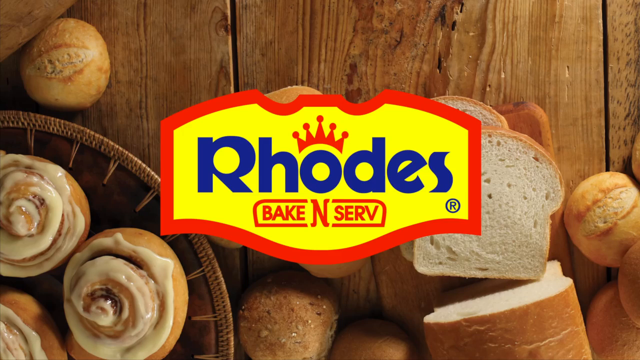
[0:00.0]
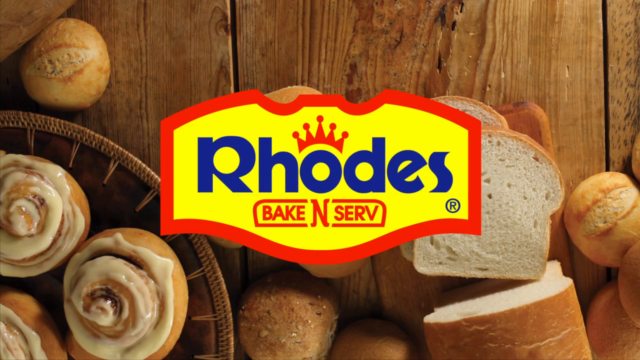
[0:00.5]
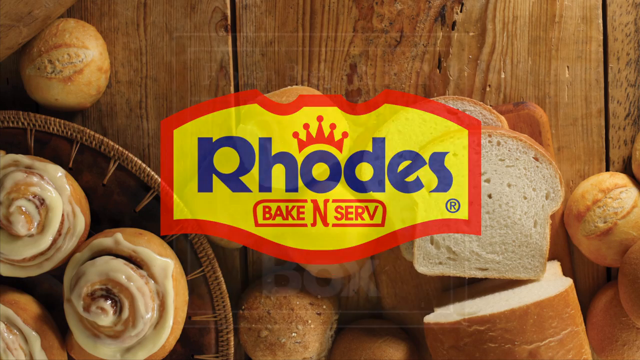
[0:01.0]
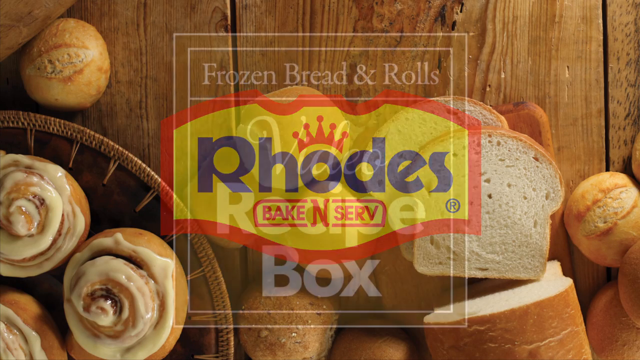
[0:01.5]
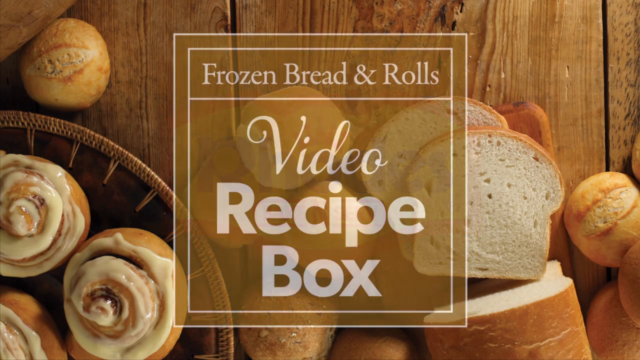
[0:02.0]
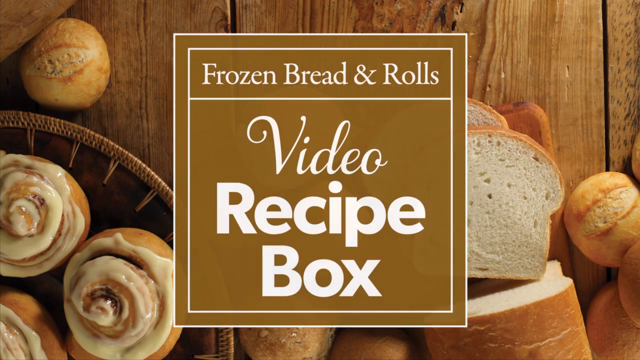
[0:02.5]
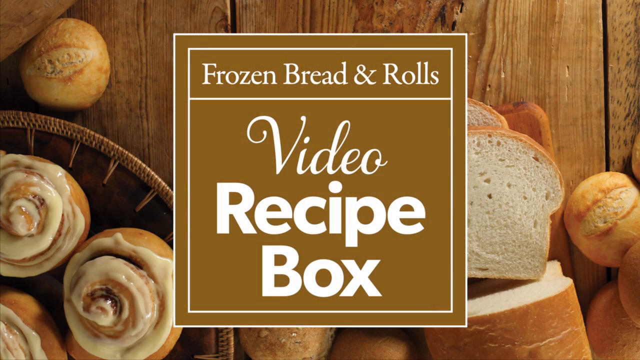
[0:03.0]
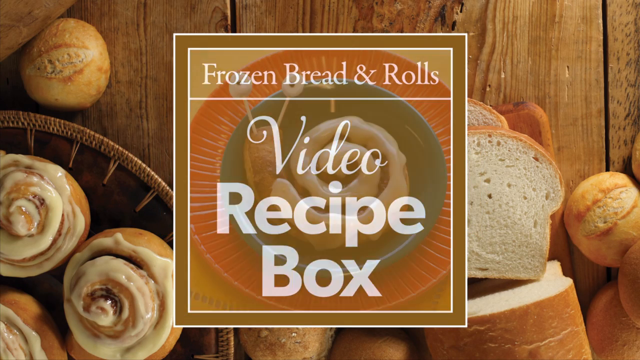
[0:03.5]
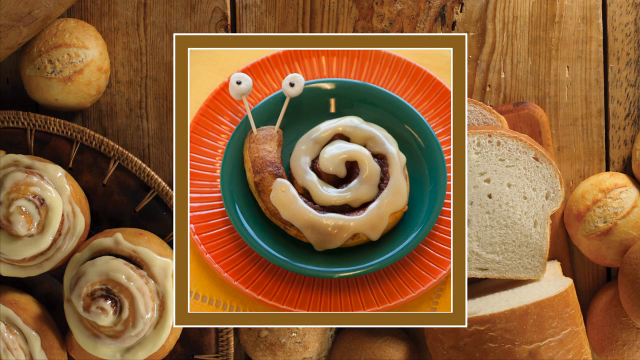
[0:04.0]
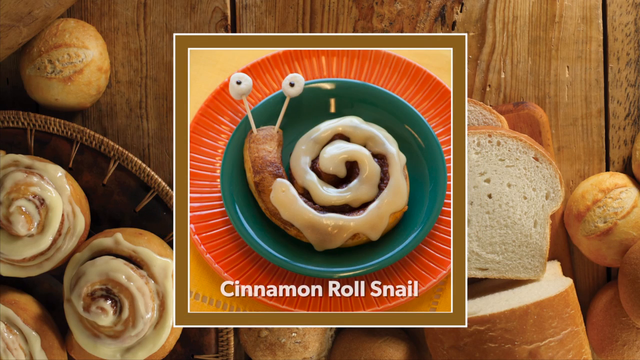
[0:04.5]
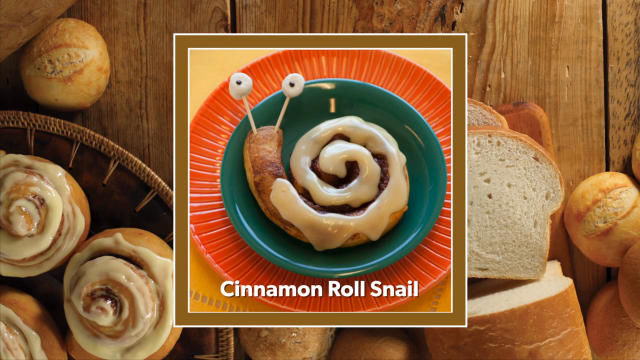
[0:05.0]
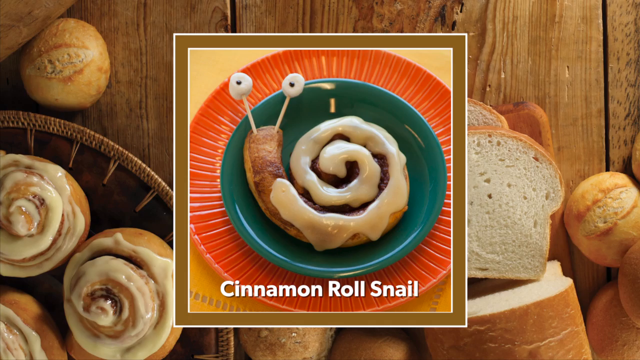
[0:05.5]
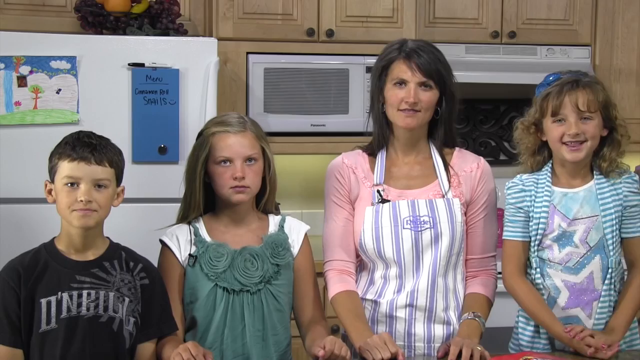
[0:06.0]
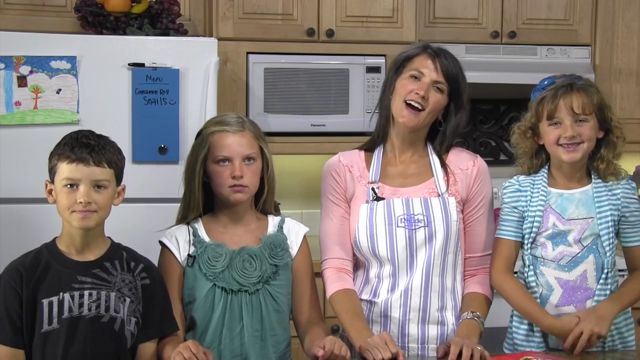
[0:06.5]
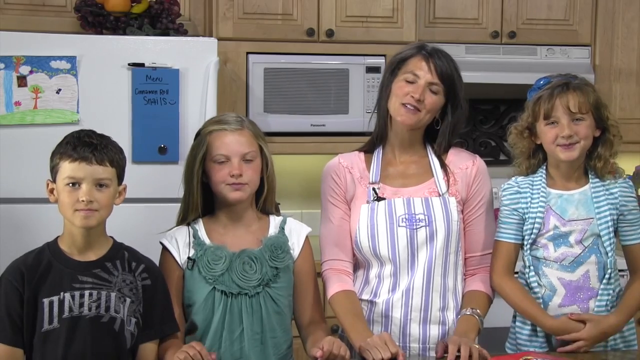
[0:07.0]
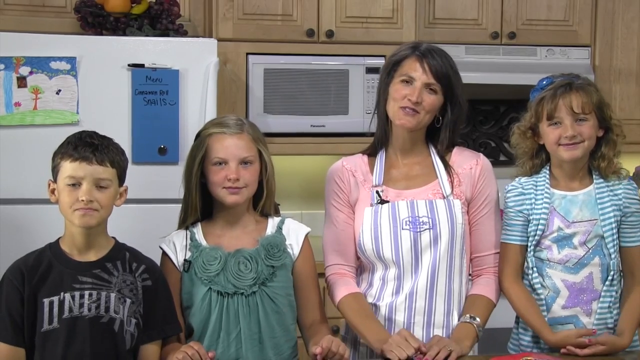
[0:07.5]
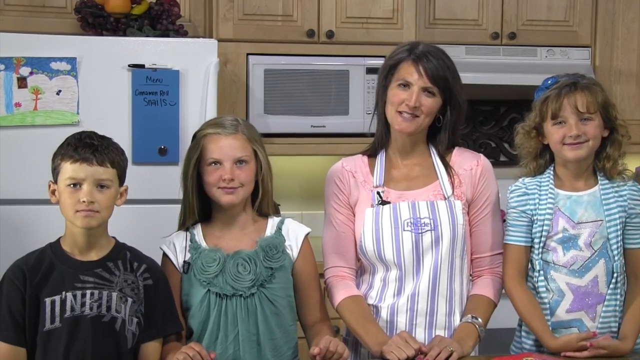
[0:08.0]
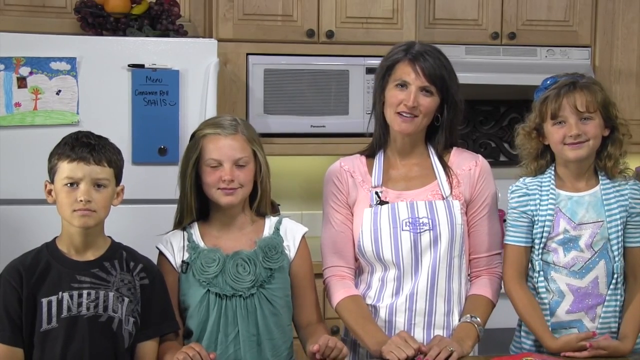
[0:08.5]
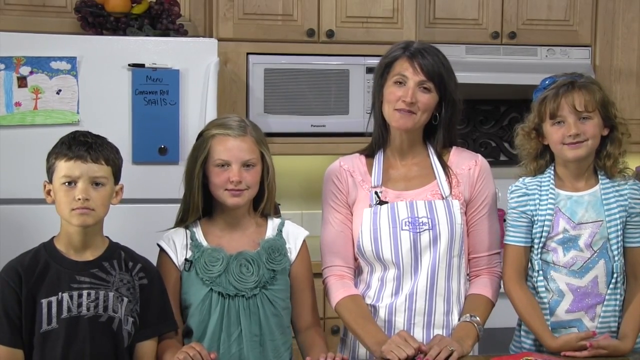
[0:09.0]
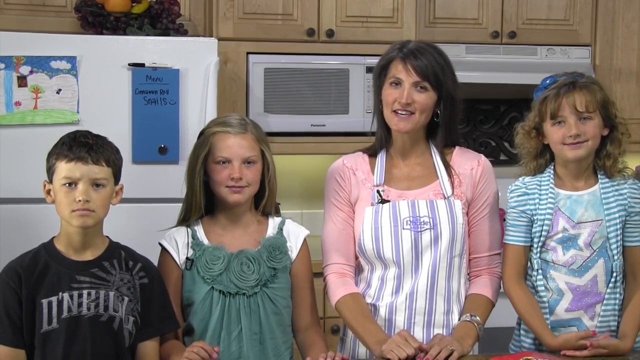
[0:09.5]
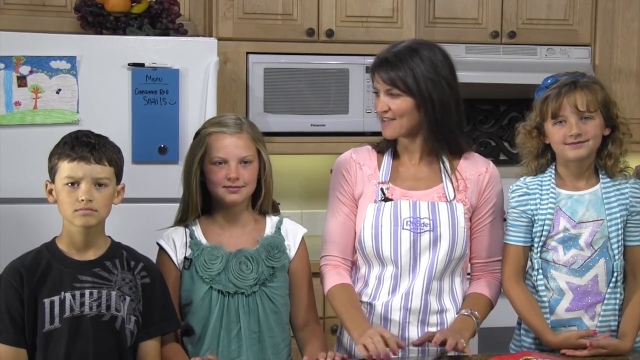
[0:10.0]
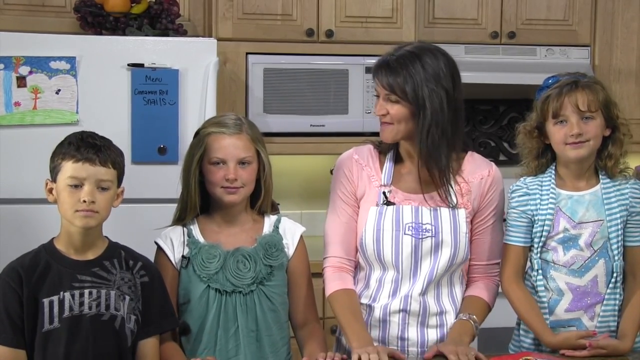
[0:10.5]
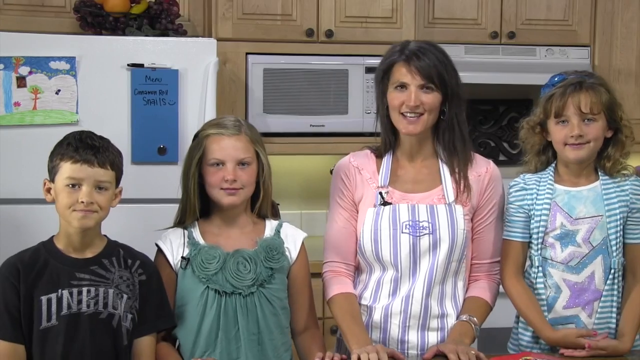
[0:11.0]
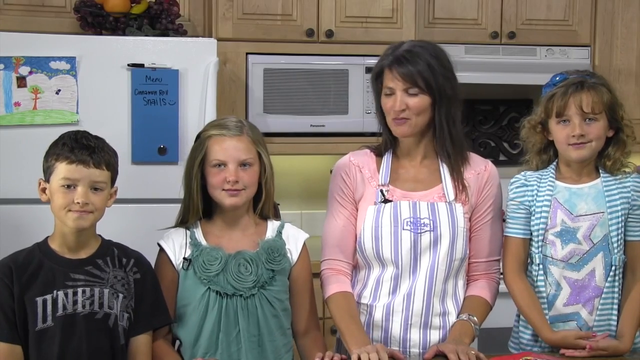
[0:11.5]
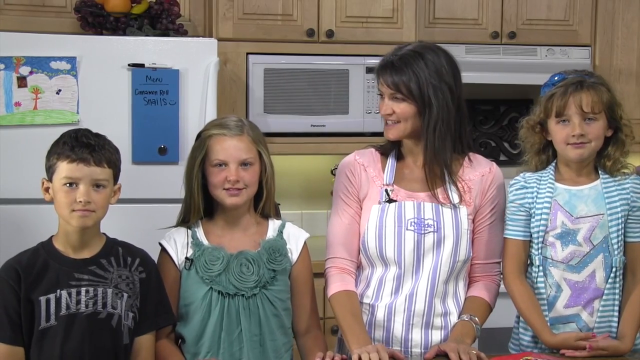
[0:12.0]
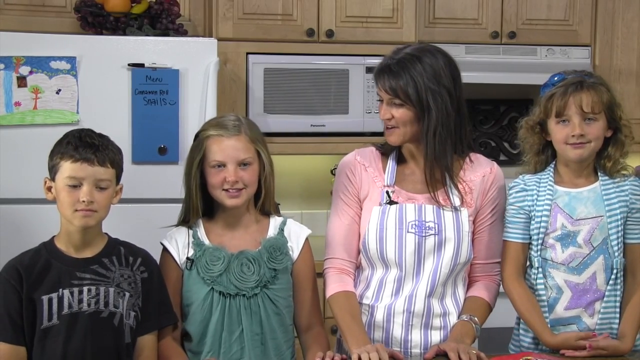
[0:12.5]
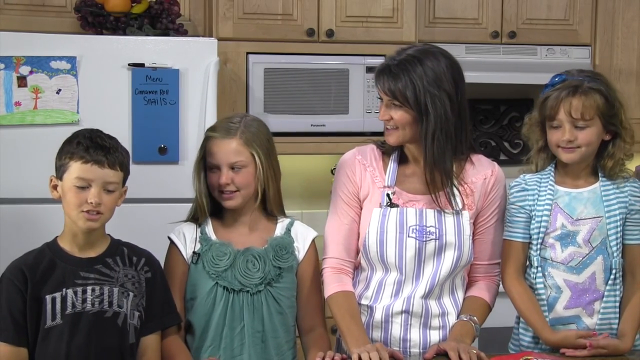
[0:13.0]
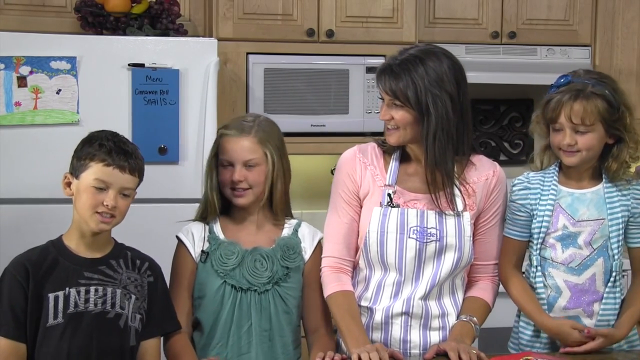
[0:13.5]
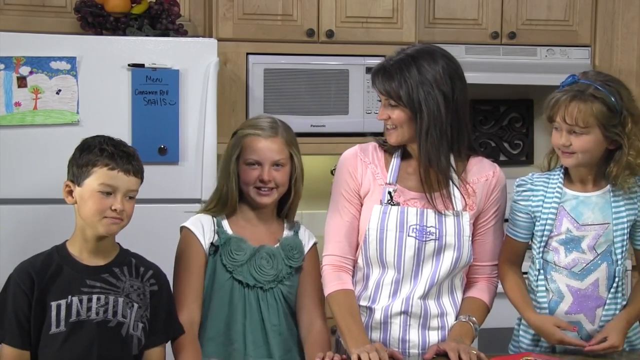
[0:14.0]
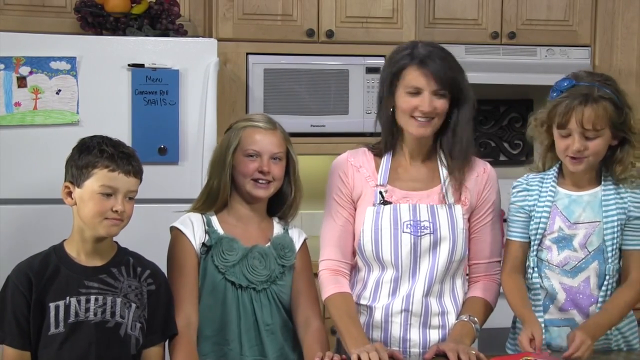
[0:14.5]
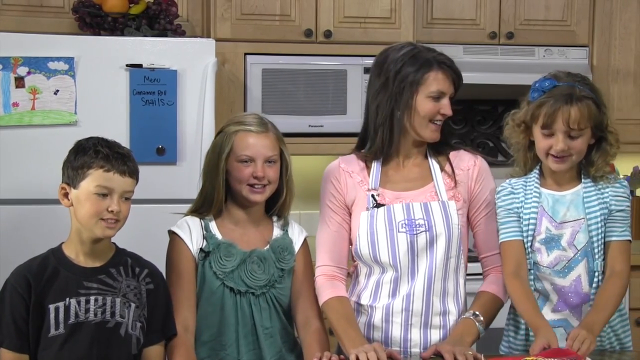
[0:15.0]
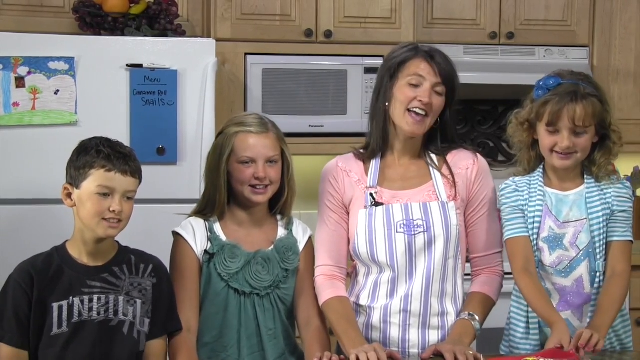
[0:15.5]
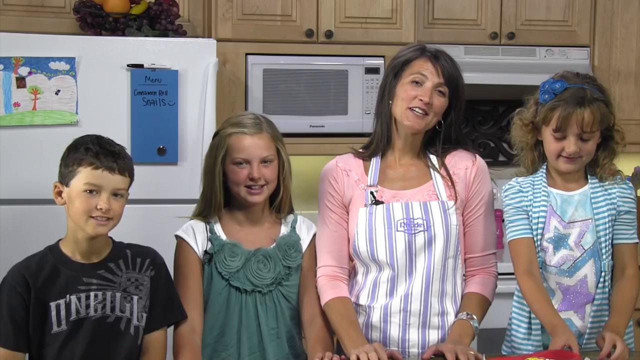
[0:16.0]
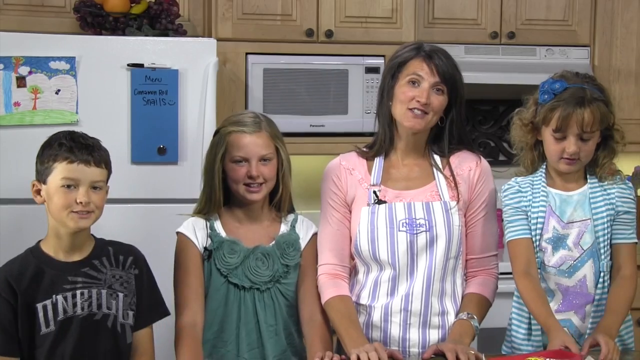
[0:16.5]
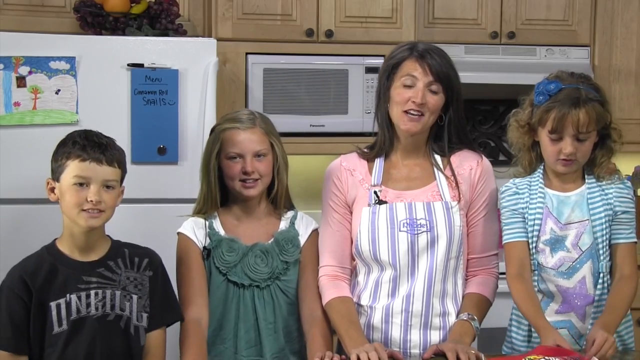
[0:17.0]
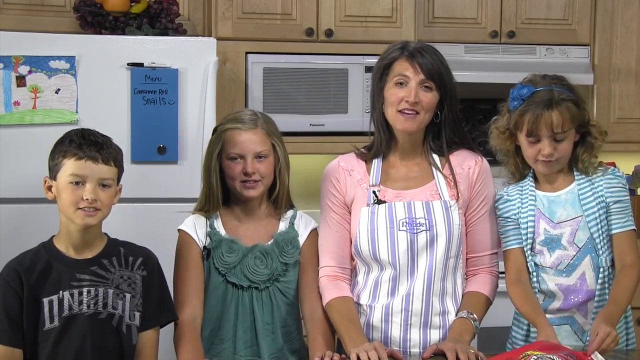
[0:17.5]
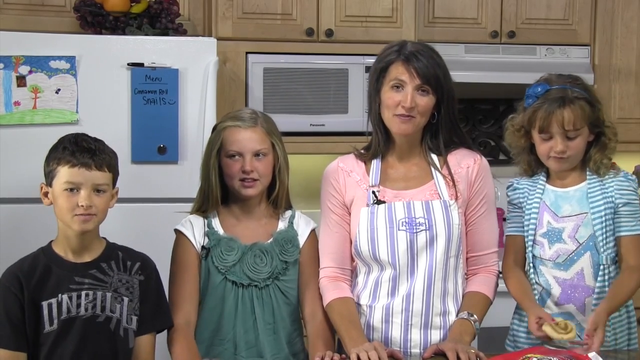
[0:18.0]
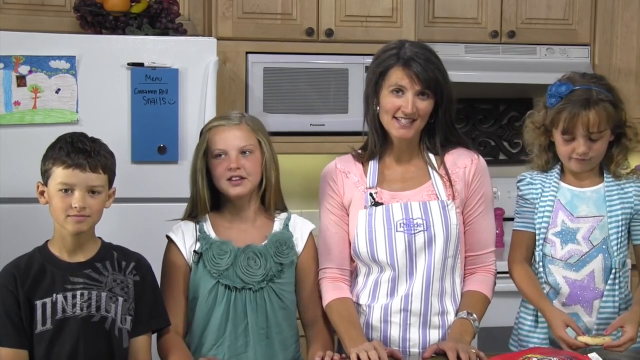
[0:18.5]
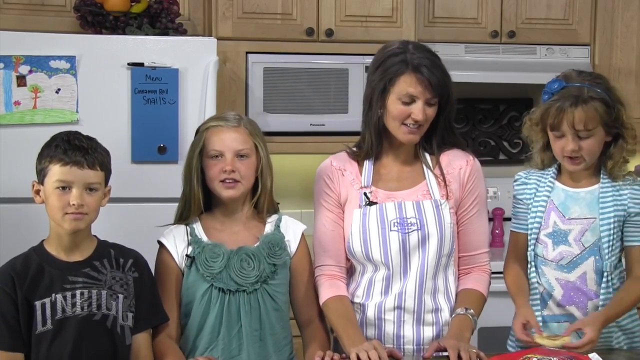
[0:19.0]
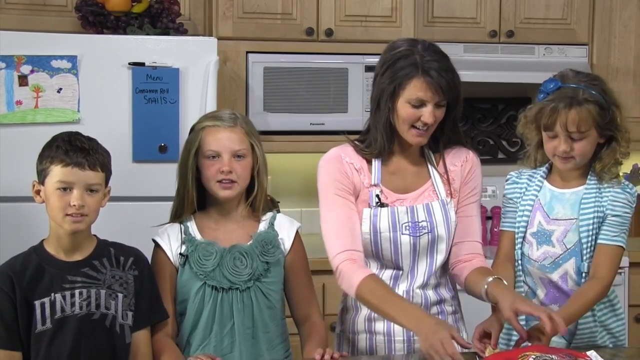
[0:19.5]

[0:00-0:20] A page appears to have a road sign at the very top. The sign's edges are red and its middle is yellow, with writing inside it in navy blue, and a red crown sits at the top of it. Written in red within the yellow area is "bake and save". Behind that are baked goods: cakes with cream on top, bread, and some scones. Next comes a brown text box that matches the surface of the table in the image behind it, which fills the whole image. It reads "frozen bread and rolls", with a white line below and, under that, "read your recipe books". A cinnamon roll snail follows: a red larger plate holds a green smaller plate, and on it is a snail-shaped cinnamon bread with white eyes and white cream on top.